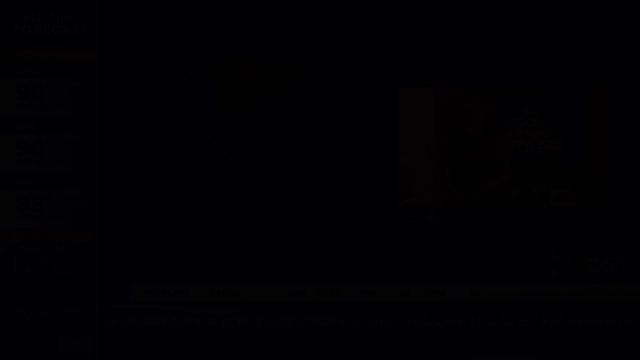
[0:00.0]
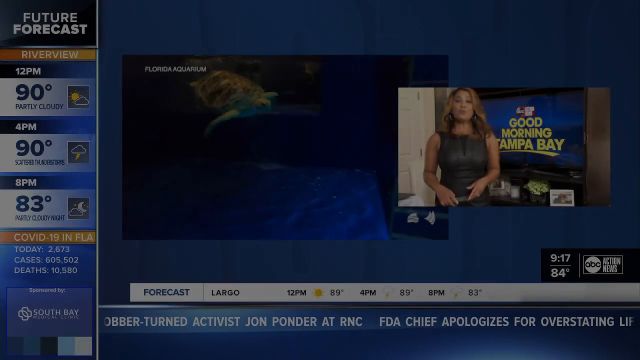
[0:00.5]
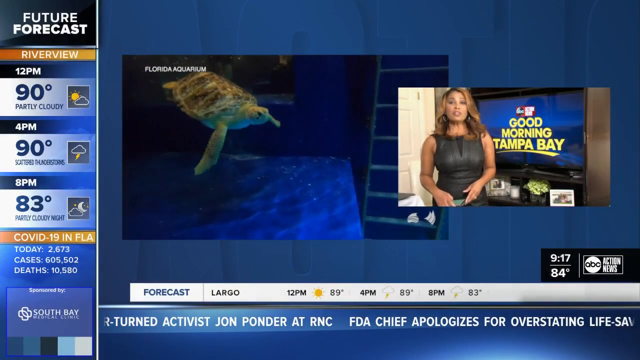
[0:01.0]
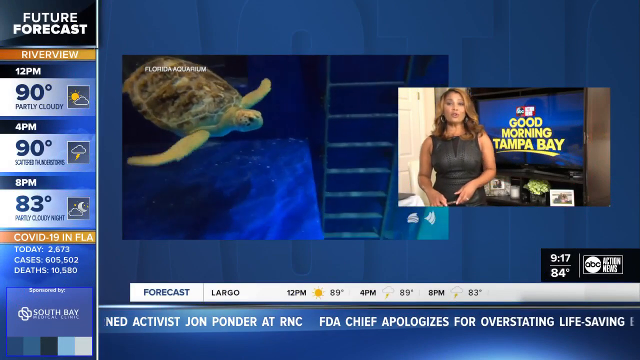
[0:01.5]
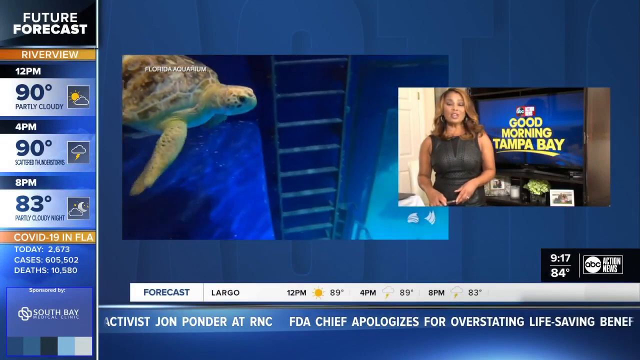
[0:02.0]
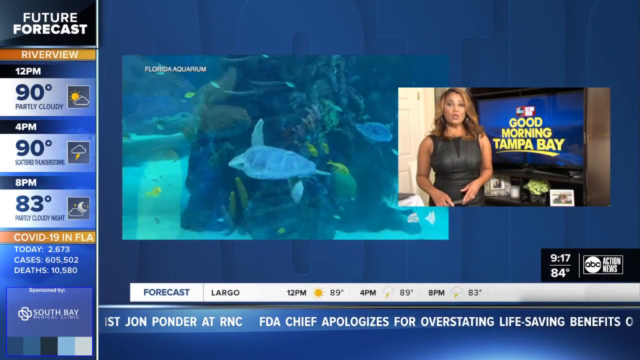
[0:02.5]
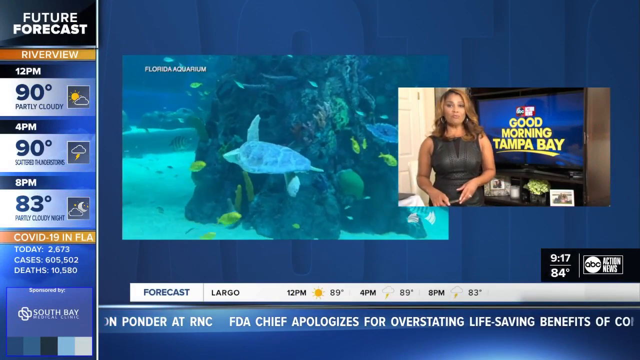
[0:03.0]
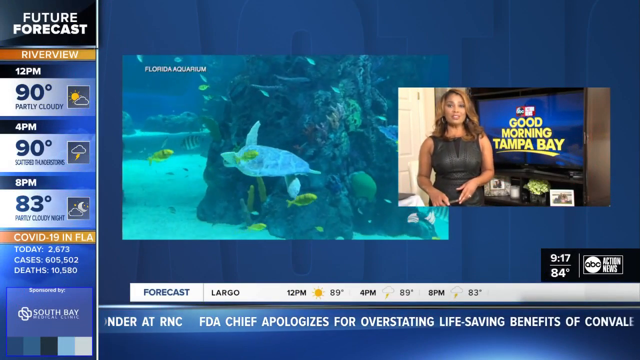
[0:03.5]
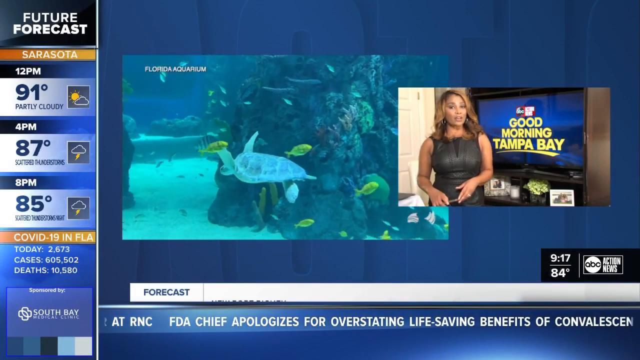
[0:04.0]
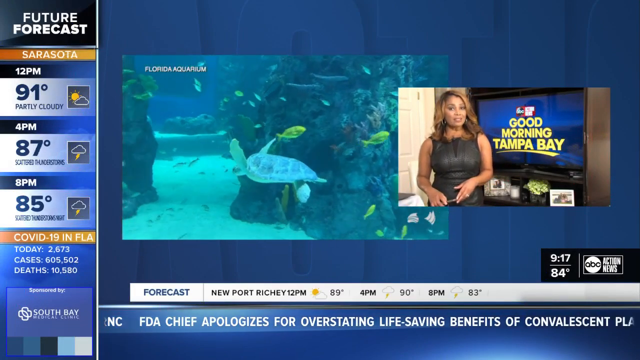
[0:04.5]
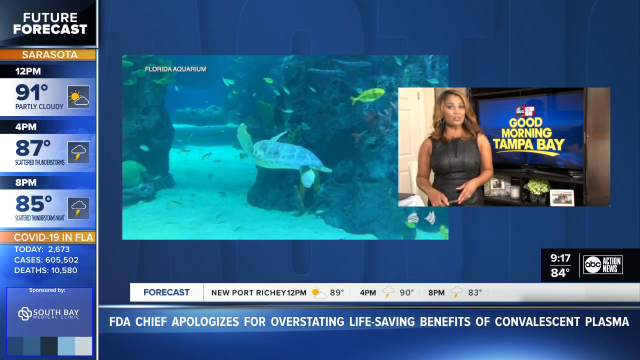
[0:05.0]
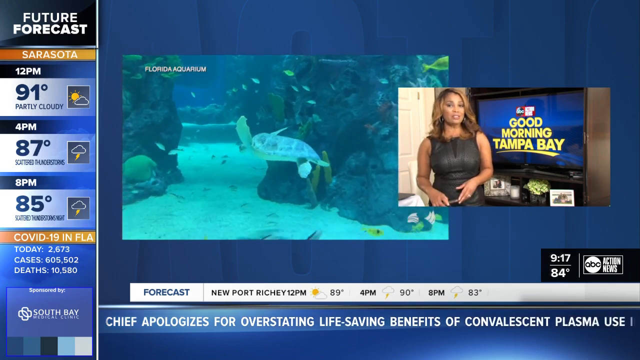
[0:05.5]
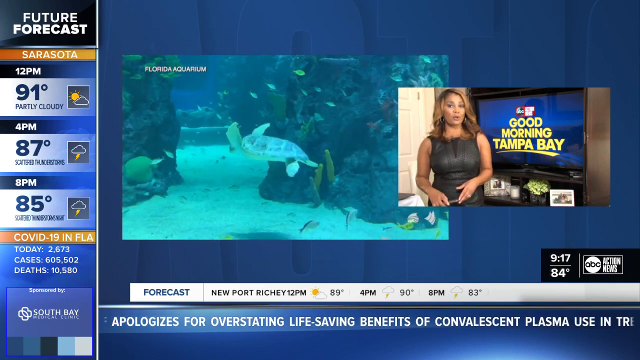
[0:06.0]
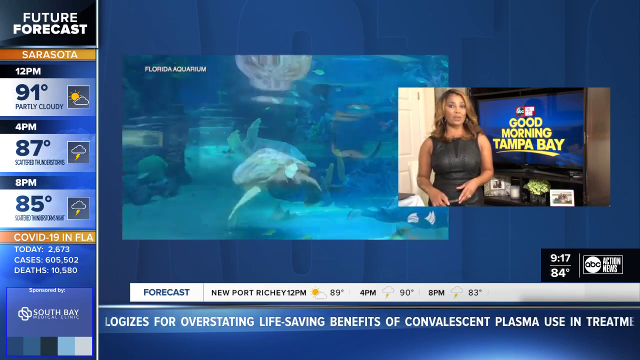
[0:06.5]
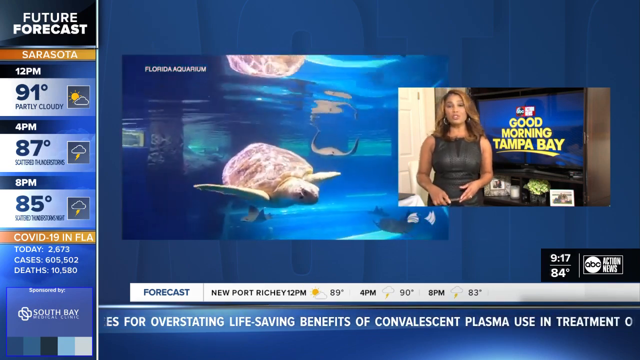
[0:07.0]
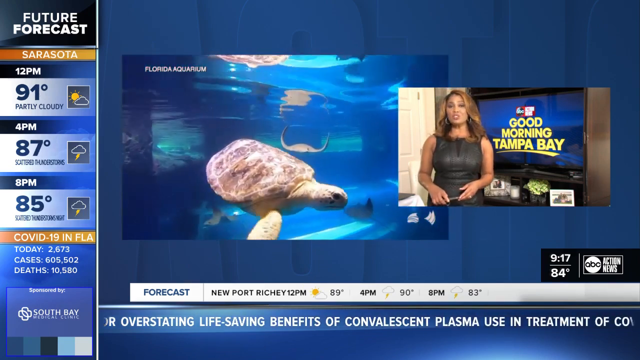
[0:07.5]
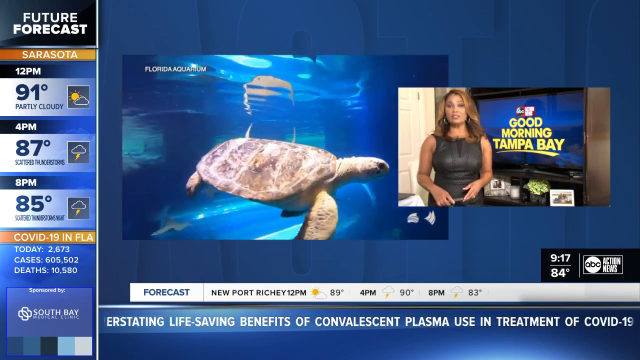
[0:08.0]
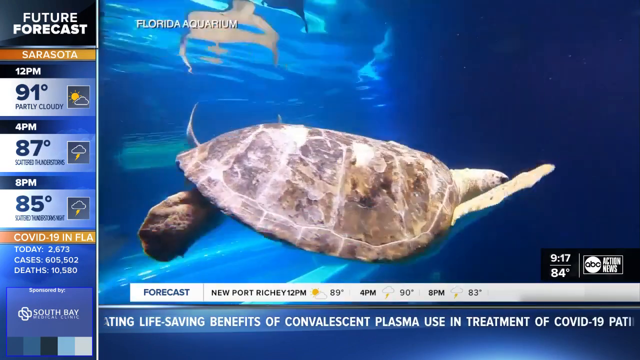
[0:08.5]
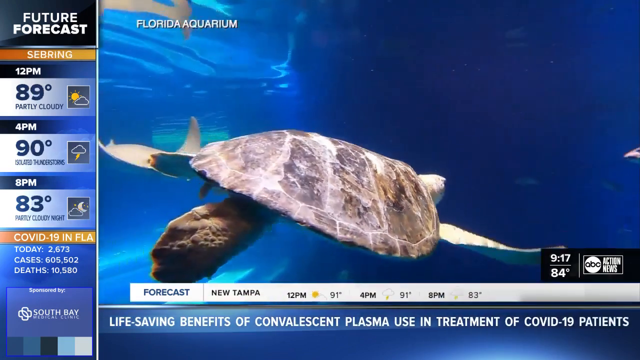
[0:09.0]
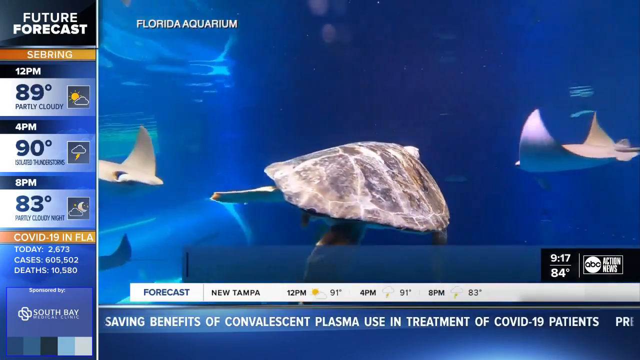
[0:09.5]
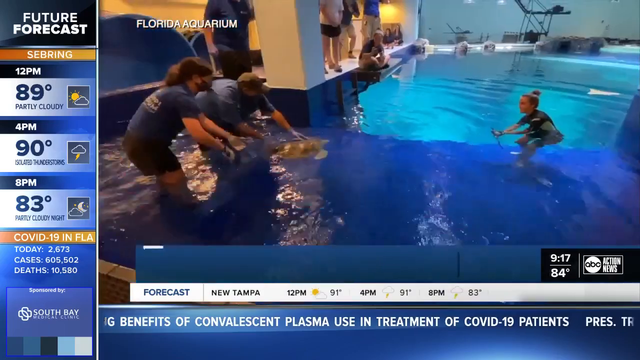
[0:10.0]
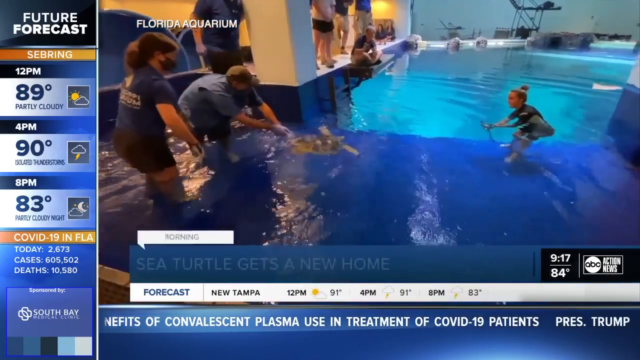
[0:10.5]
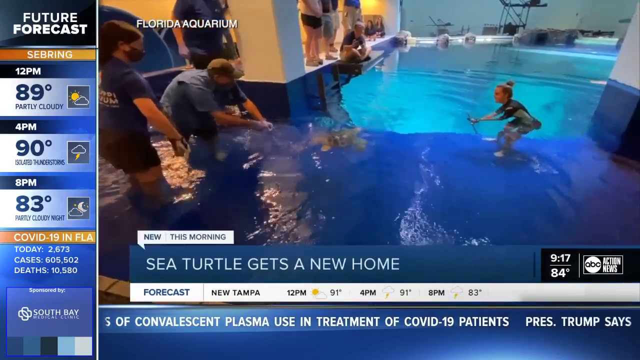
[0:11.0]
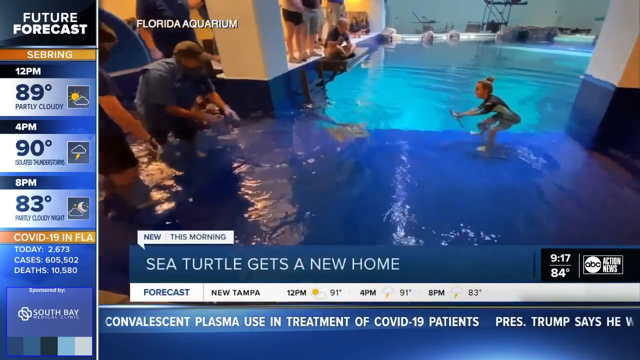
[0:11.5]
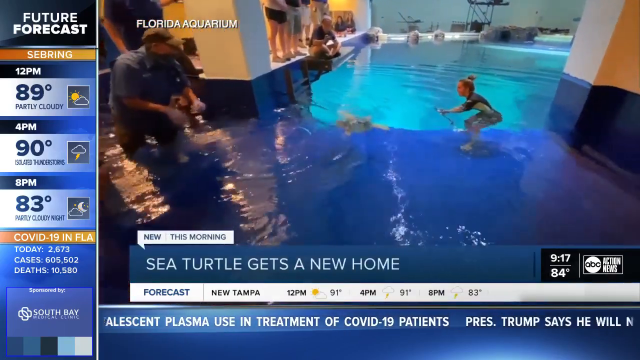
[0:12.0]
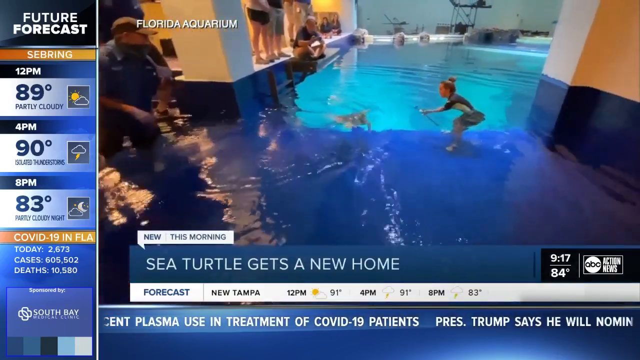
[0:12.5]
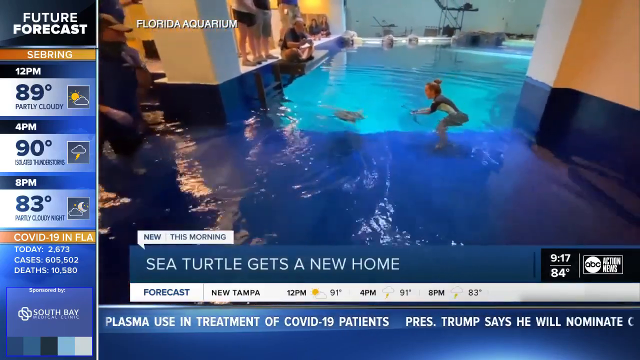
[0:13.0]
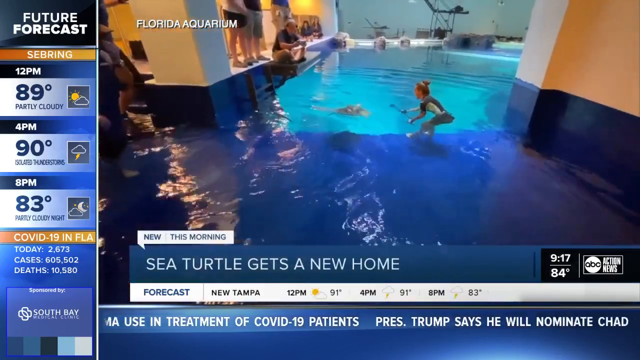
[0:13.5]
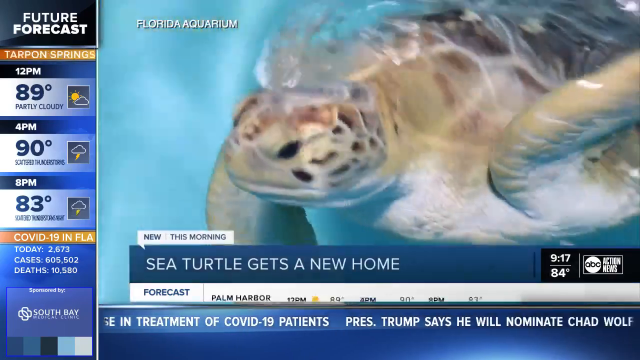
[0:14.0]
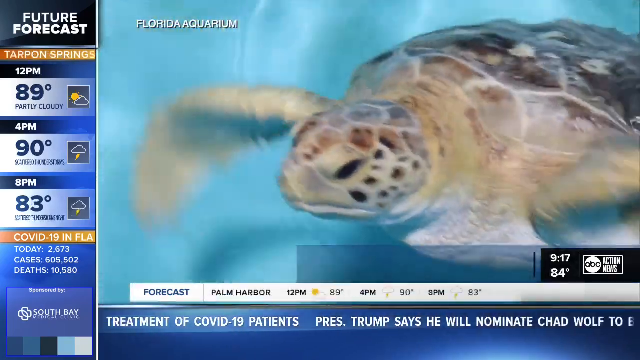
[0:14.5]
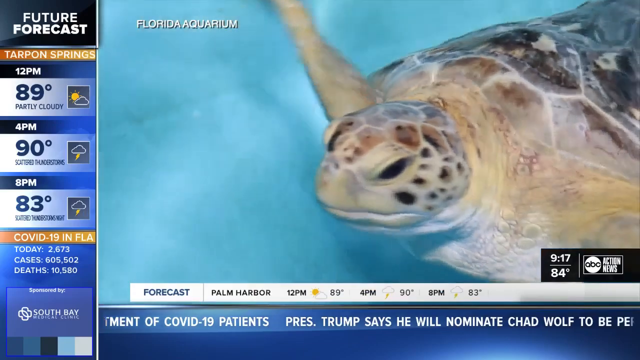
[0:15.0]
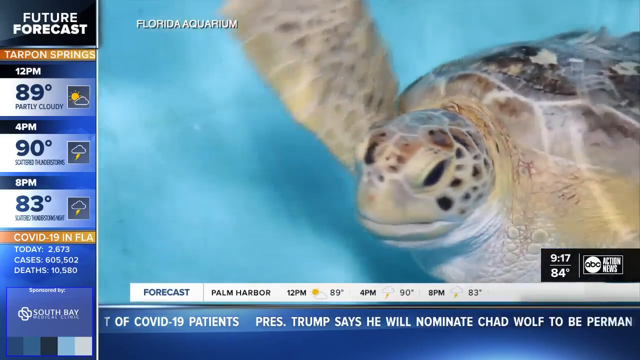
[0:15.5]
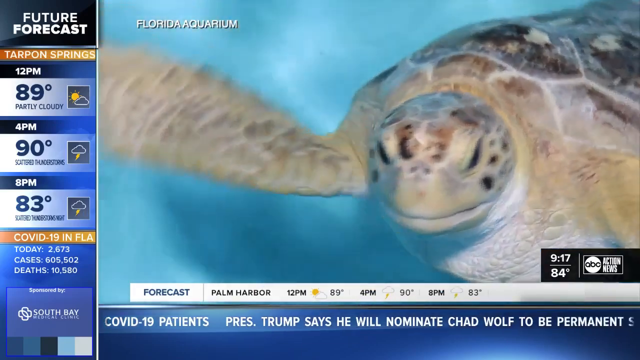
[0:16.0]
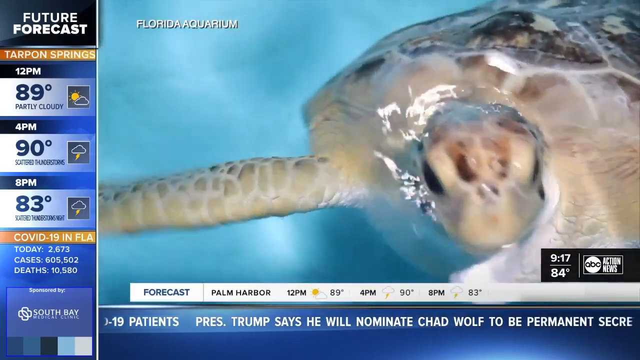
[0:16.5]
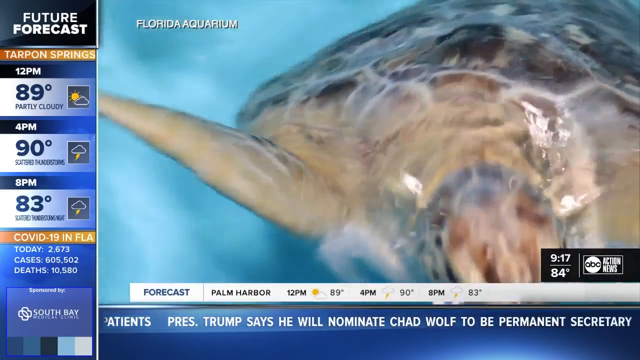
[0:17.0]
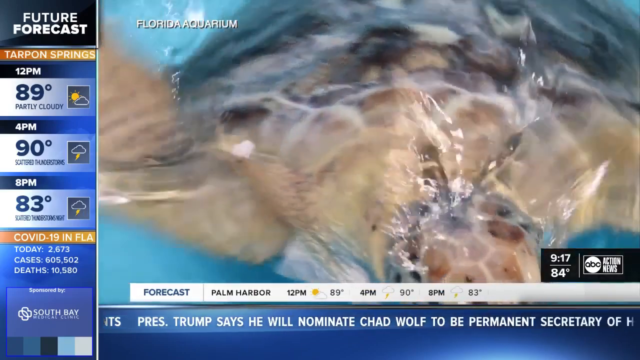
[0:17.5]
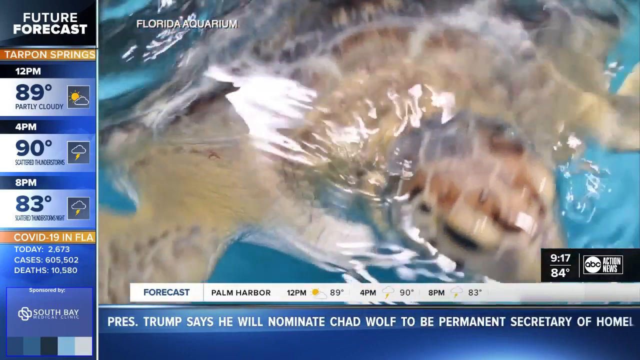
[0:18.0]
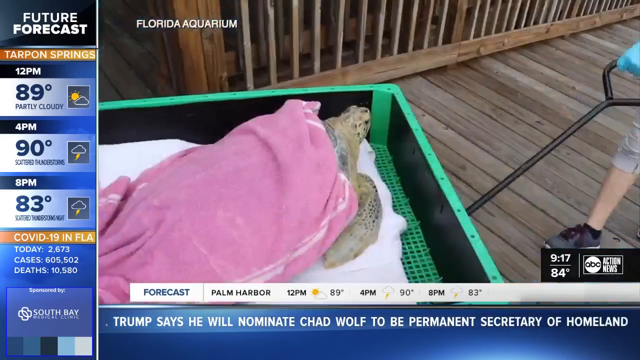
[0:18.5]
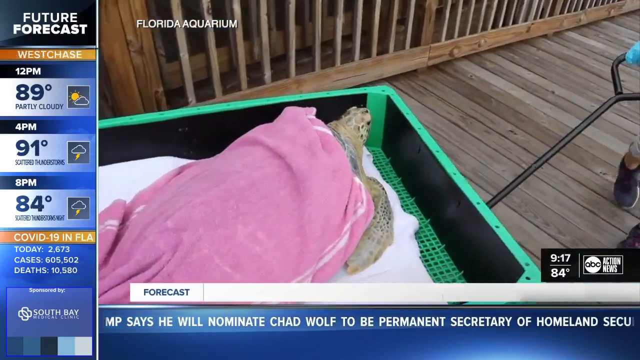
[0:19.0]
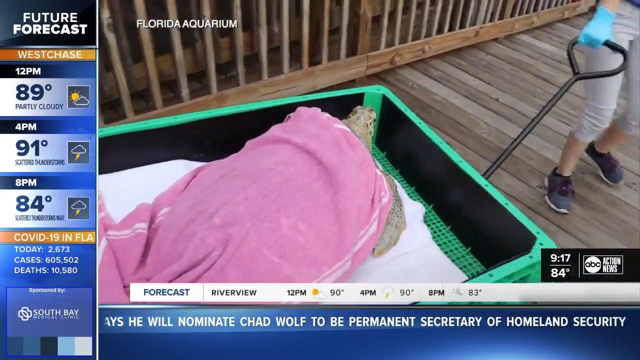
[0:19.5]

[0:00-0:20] A good morning in Tampa Bay segment shows different animals in the Florida Aquarium, such as turtles, stingrays and fish. People are seen in the same body of water as the turtles, and the turtles are transported by a wagon.